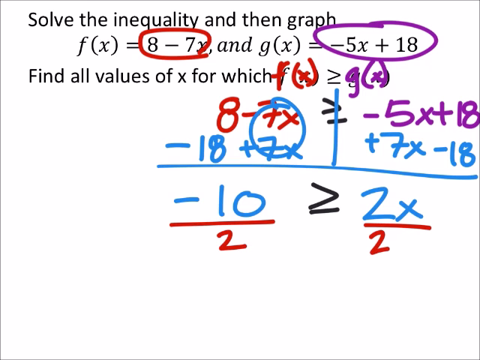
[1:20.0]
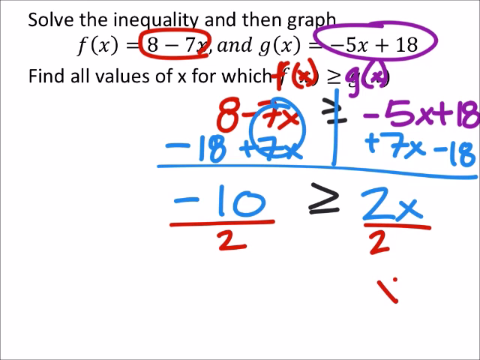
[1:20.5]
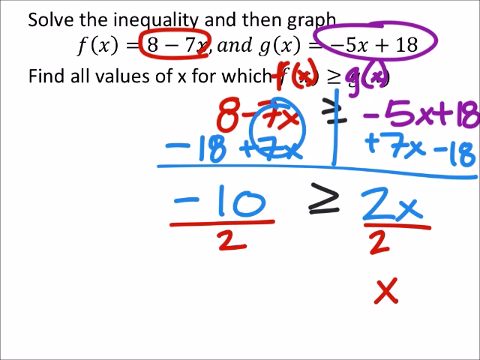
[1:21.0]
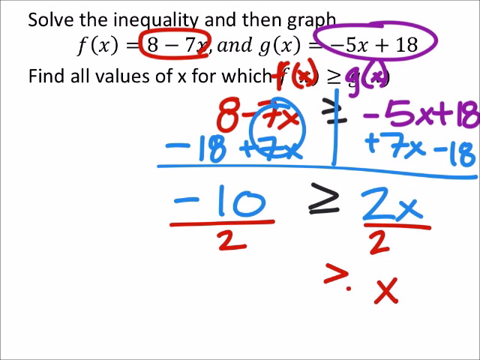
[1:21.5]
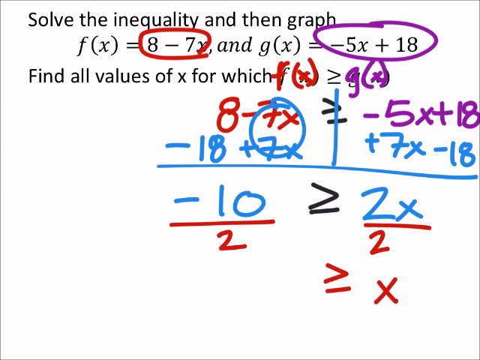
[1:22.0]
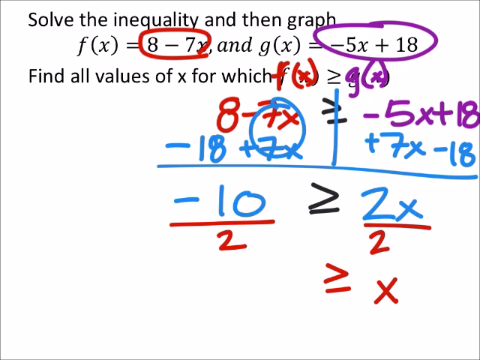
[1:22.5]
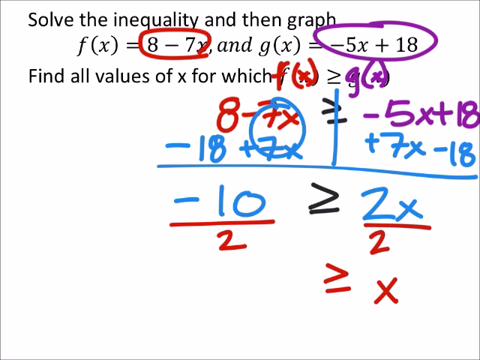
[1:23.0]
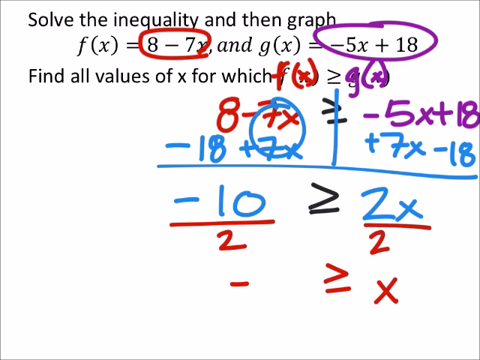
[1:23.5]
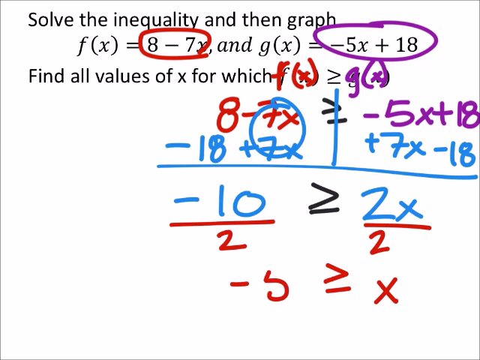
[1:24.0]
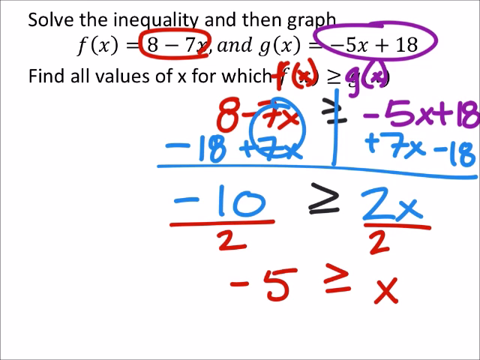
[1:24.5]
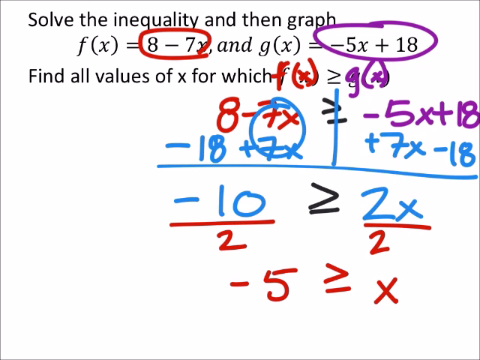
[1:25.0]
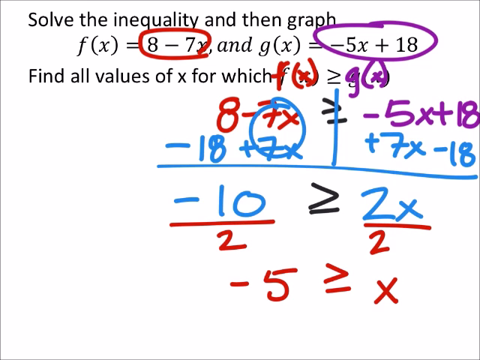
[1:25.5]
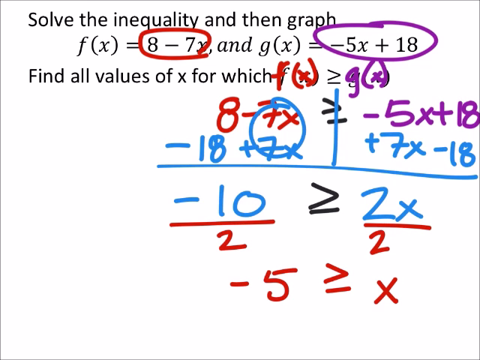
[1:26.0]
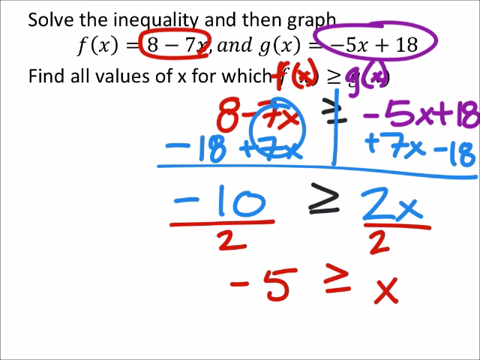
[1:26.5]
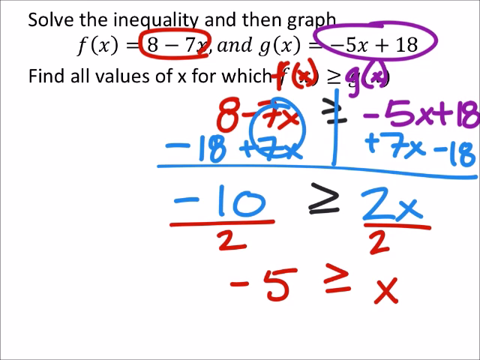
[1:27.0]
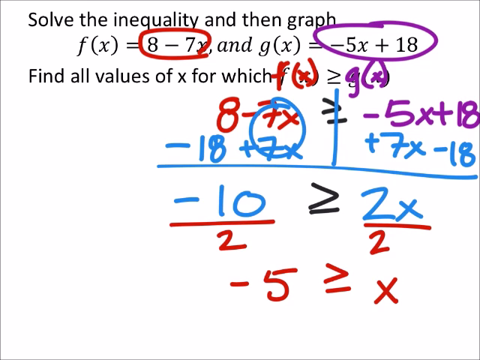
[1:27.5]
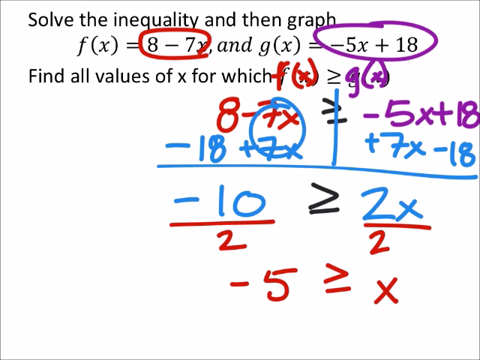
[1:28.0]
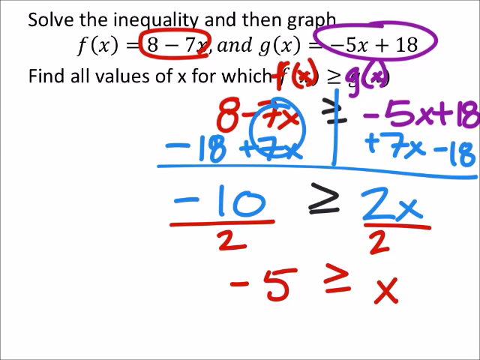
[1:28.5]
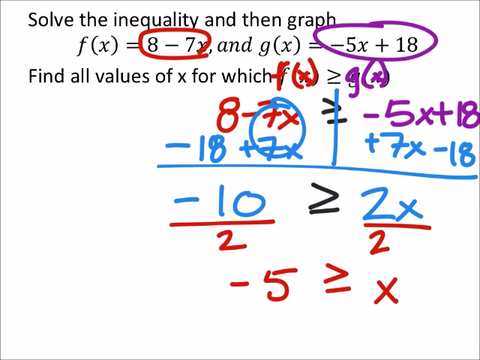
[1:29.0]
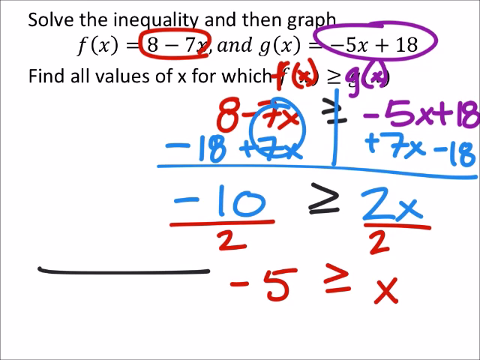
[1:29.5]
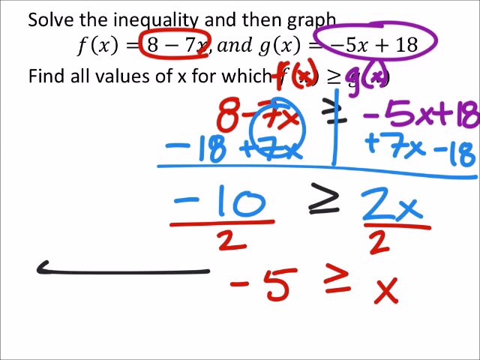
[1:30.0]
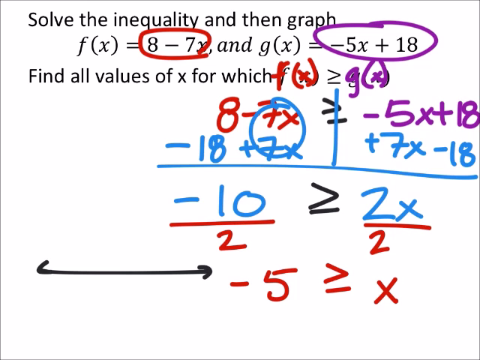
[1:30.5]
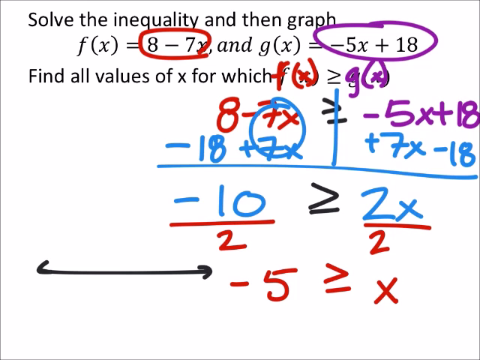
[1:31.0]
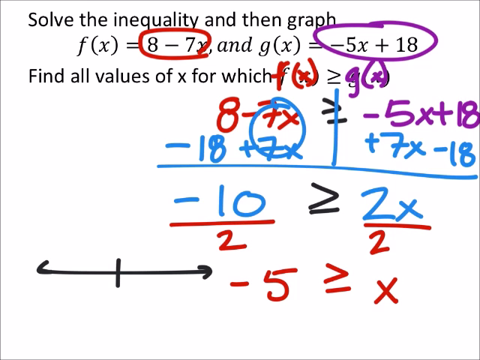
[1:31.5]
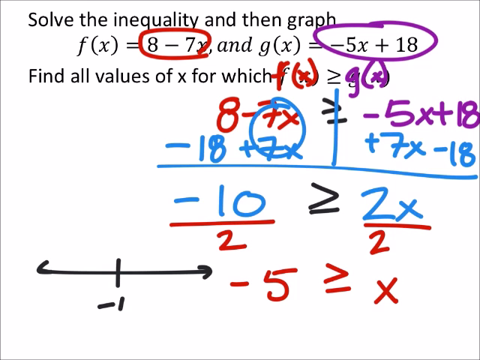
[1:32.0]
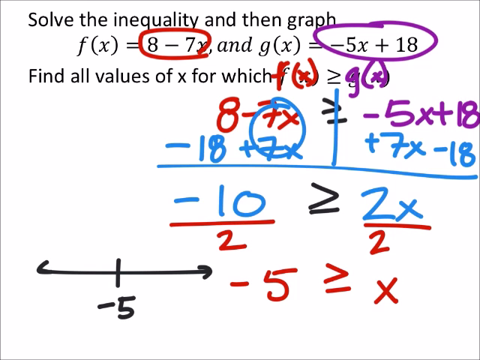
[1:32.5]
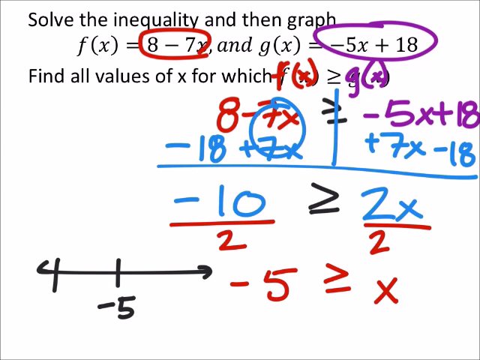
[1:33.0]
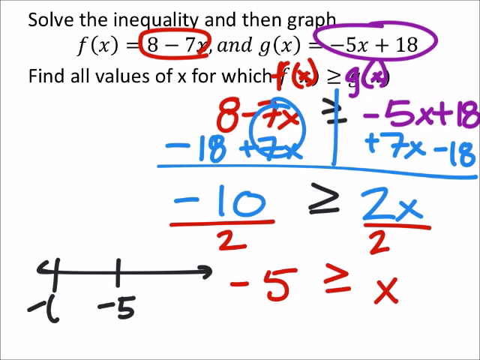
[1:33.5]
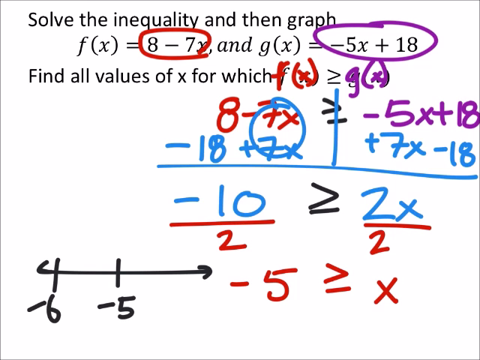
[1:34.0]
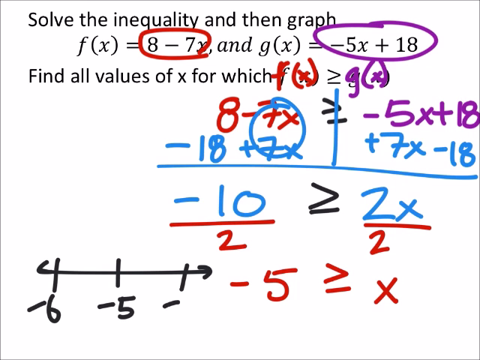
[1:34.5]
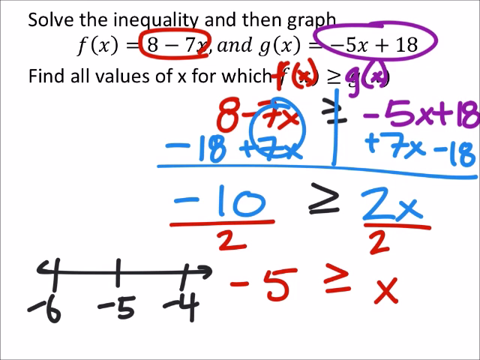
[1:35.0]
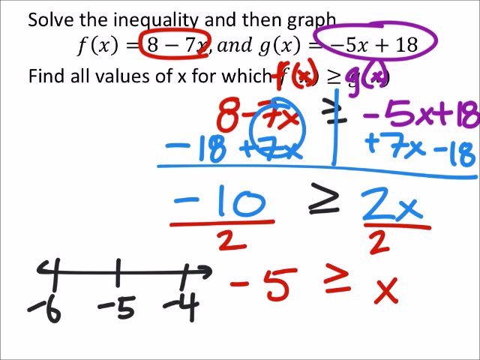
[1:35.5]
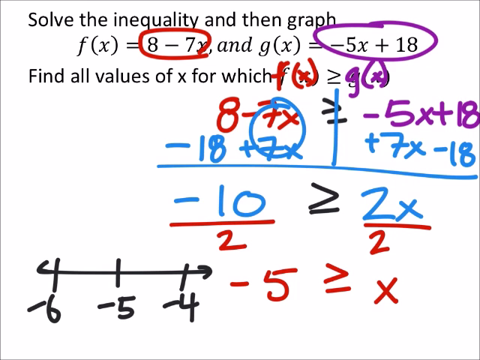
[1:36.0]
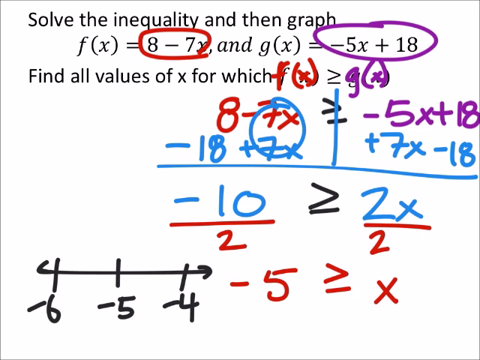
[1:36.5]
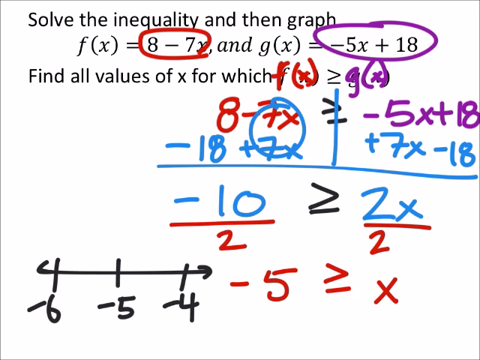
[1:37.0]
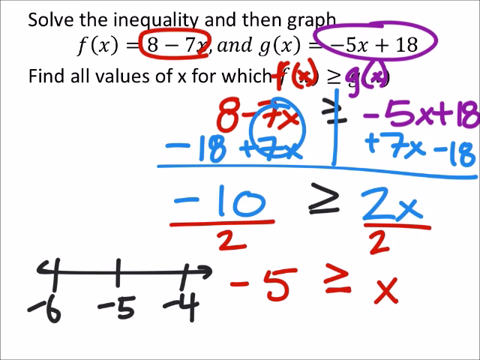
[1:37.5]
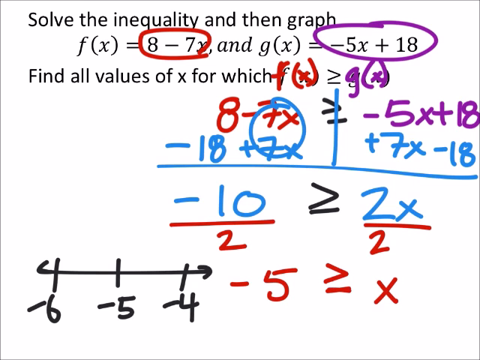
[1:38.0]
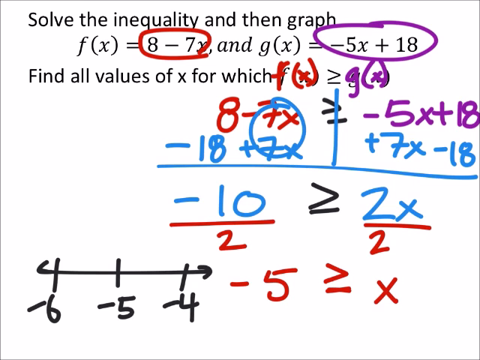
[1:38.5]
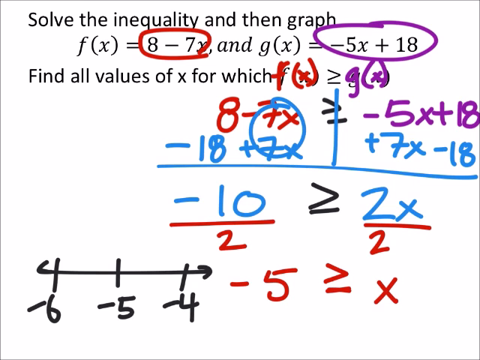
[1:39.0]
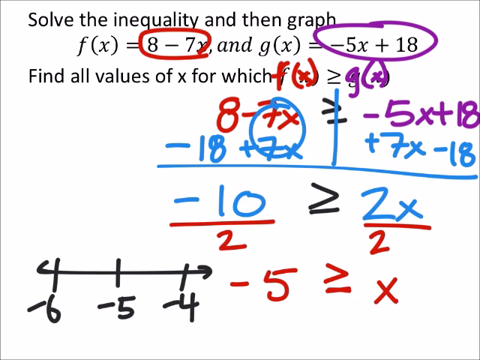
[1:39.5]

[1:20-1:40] With the red marker, an X is drawn below the bottom red 2. To the left of that X, a red greater-than sign with a line underneath is drawn, and to the left of that, minus 5 in red, all below the earlier red 2s. On the left side beside the minus 5, a line is drawn with a smaller line in the center and arrow points on each end pointing in their respective directions. A minus 5 is written below that in black. On the left of the arrow, near the left arrowhead, a vertical line is drawn through it, and a minus 6 appears below that line. On the right side of the arrow, another vertical line is drawn, with minus 4 written underneath it.